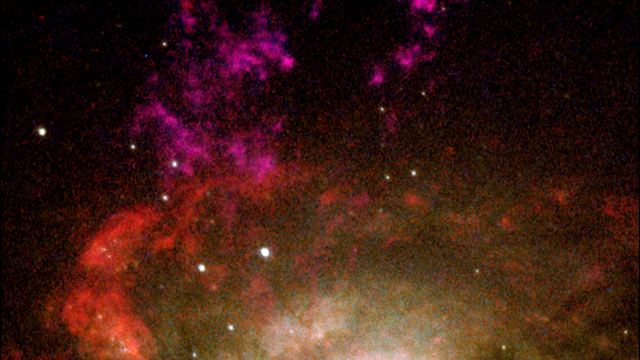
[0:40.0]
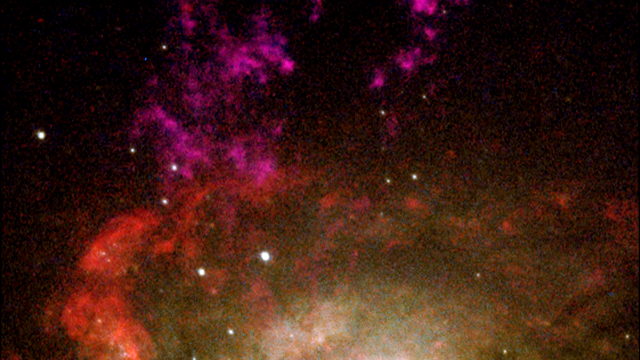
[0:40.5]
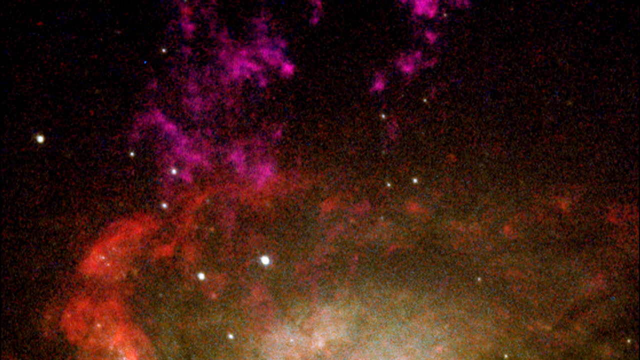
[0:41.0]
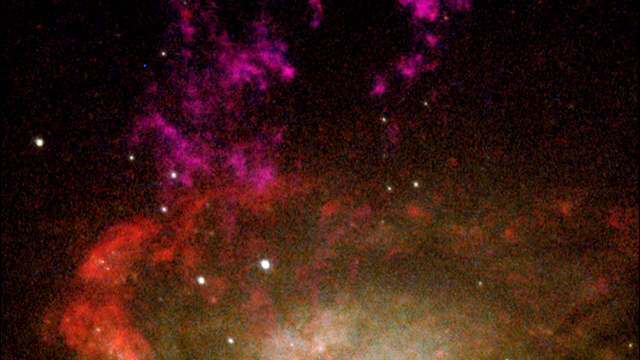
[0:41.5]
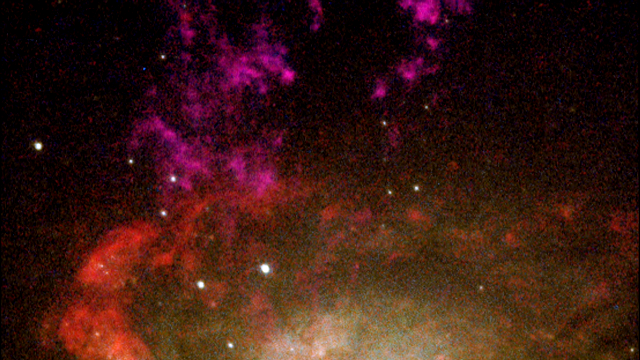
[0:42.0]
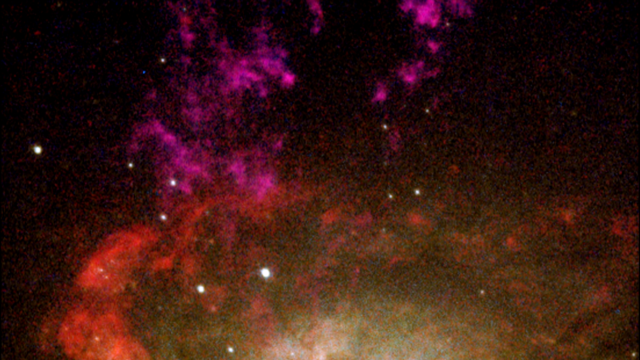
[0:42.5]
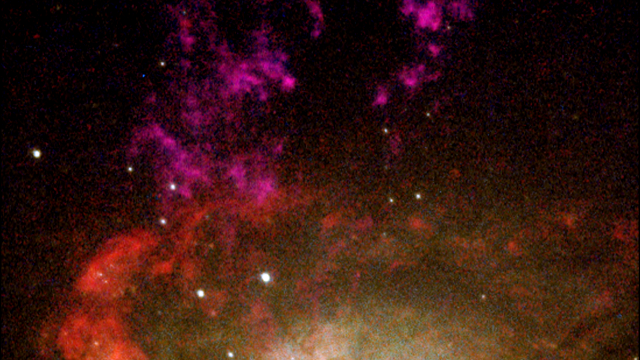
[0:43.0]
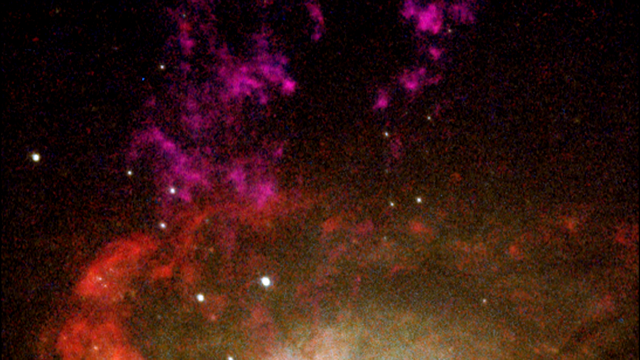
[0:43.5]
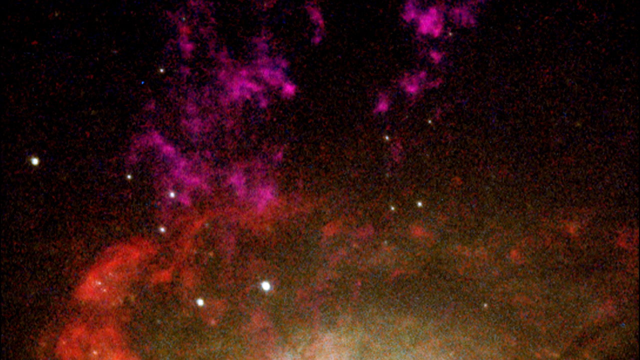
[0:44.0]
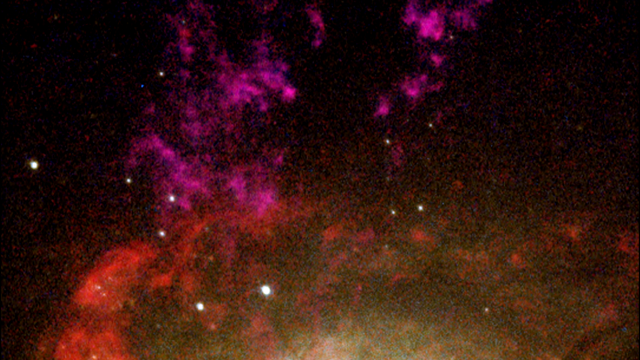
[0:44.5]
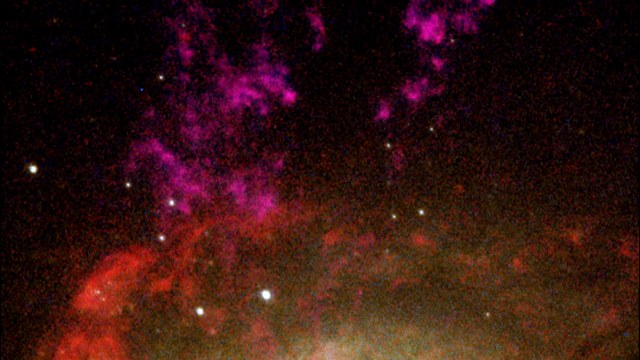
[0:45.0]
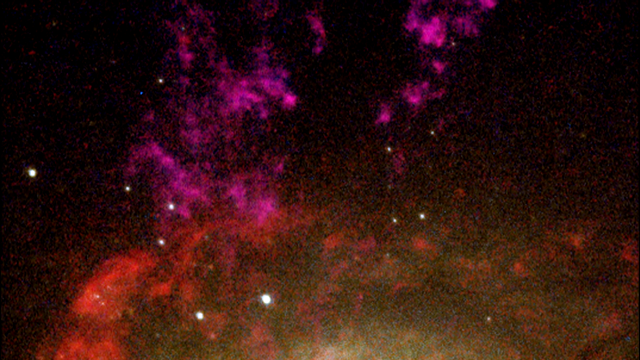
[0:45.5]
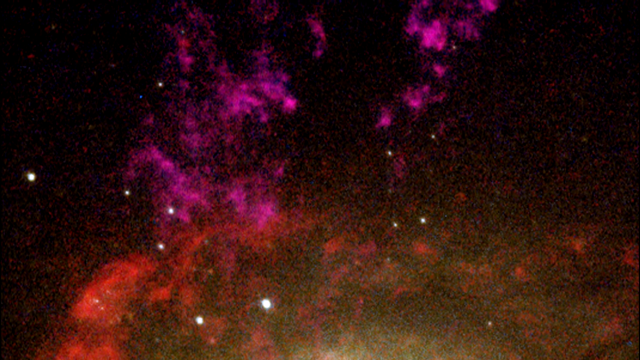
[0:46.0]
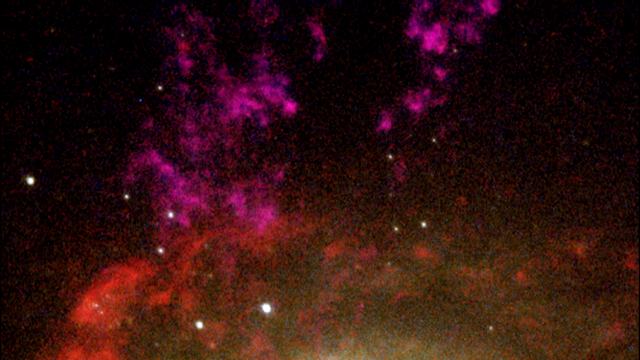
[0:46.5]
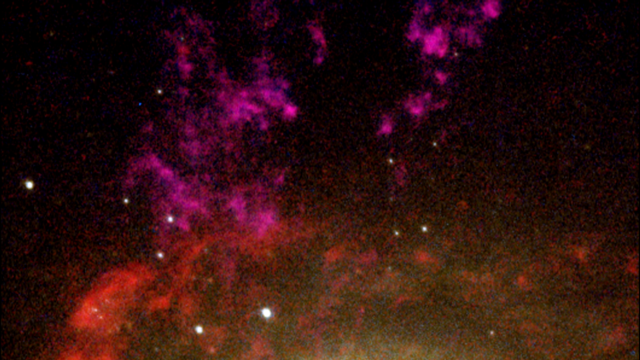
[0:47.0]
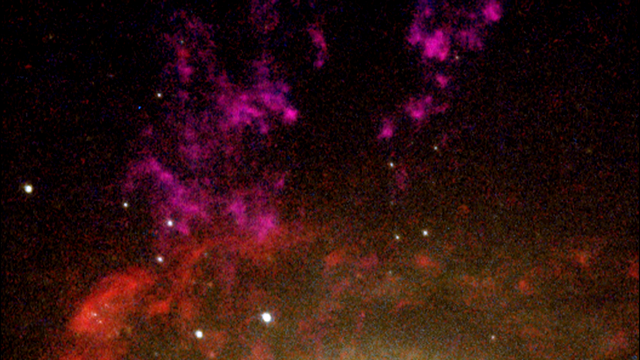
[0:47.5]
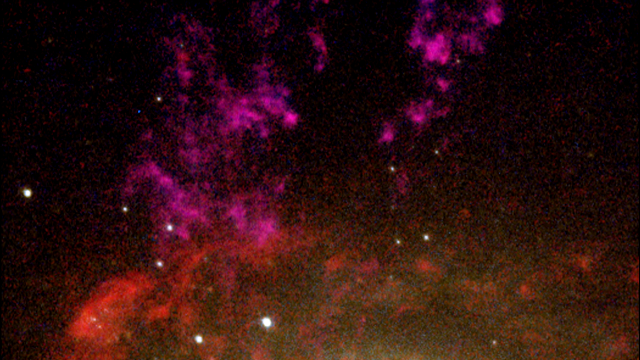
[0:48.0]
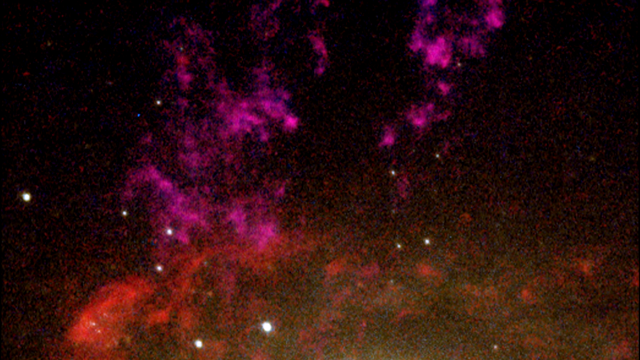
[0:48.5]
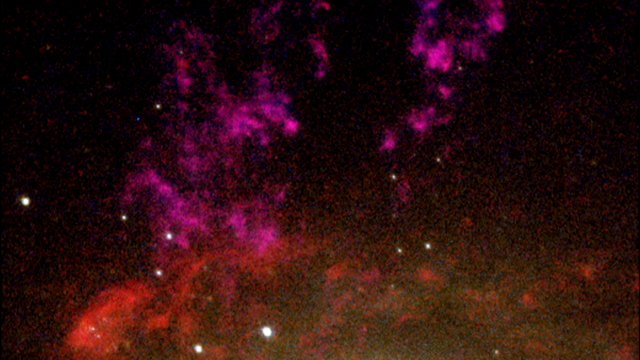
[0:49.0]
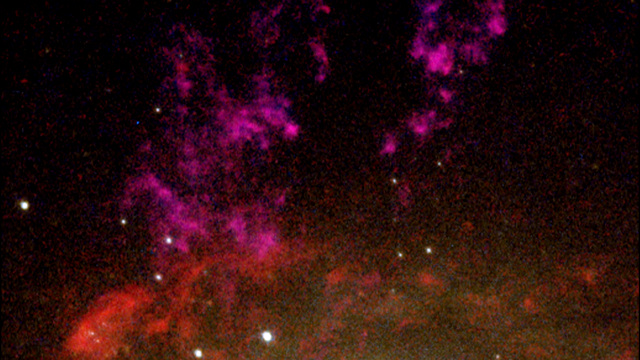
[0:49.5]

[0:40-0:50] The video is zoomed in on the pink fiery part radiating out of the top of the cloud-like structure. The pink is very bright and contrasts with the reds and darker tones of the main image. Small bright dots, possibly stars, continue to appear throughout the image. The pink flames look like heat or a barbecue and are very distinct and bold. The video simply pans over a certain part of the image, and it is very unclear what the image may be.